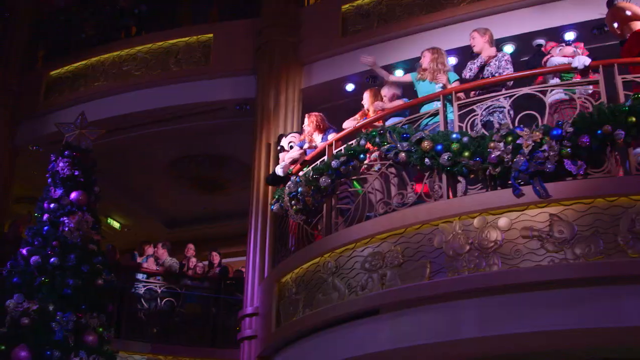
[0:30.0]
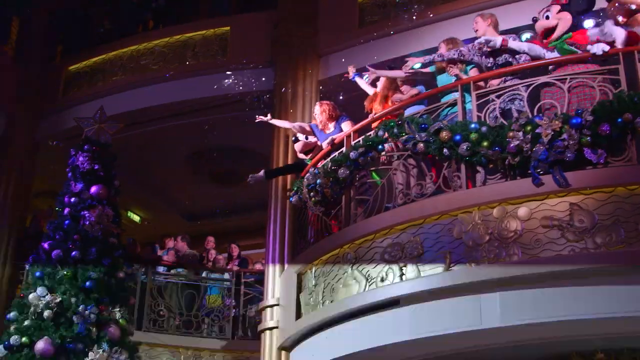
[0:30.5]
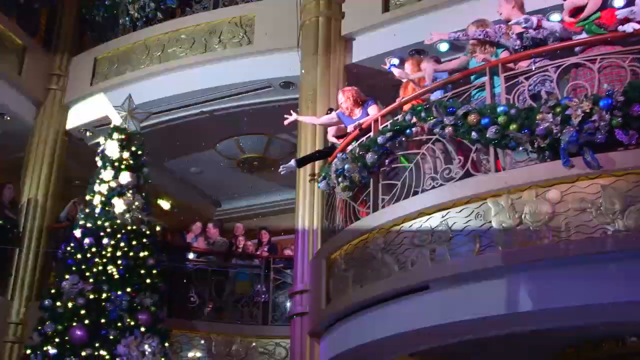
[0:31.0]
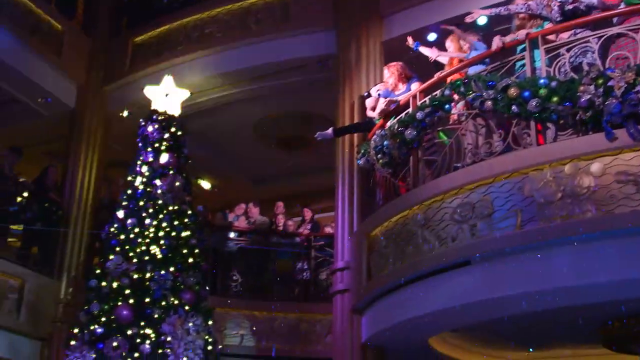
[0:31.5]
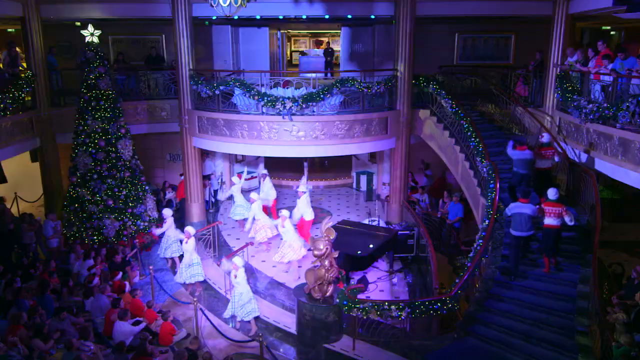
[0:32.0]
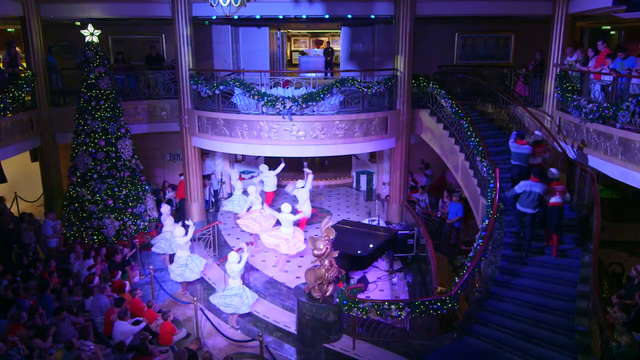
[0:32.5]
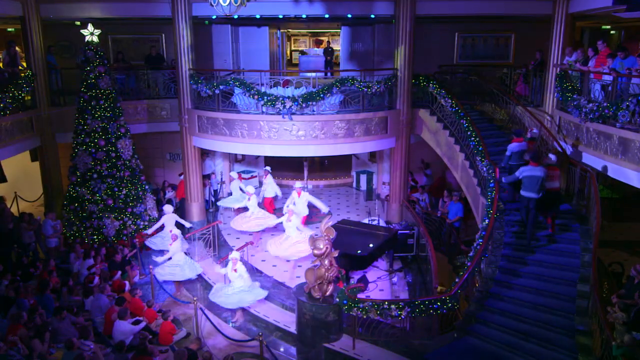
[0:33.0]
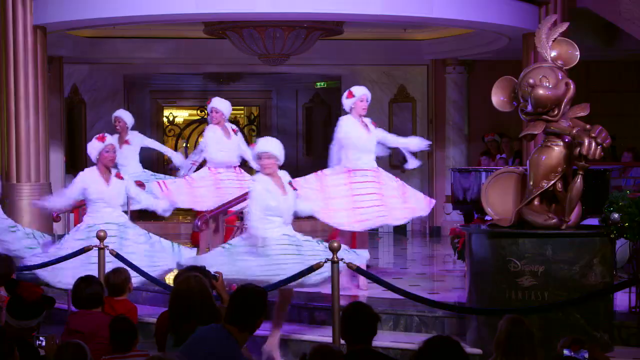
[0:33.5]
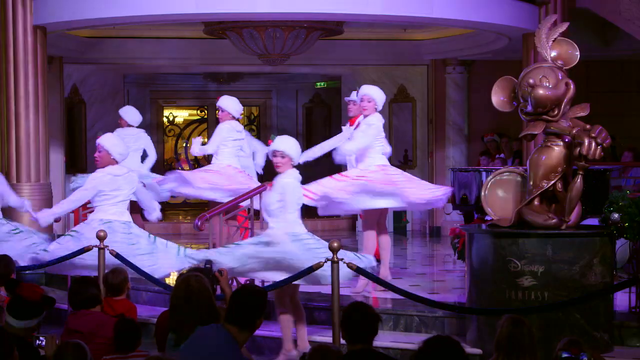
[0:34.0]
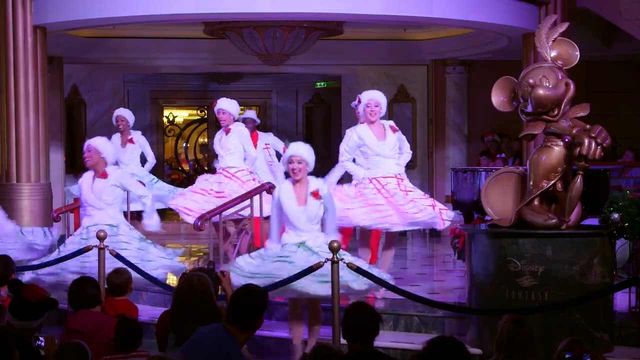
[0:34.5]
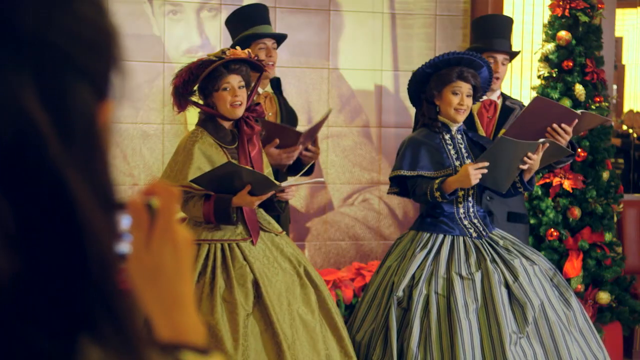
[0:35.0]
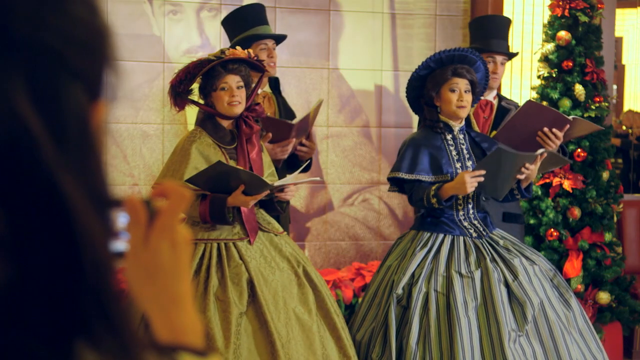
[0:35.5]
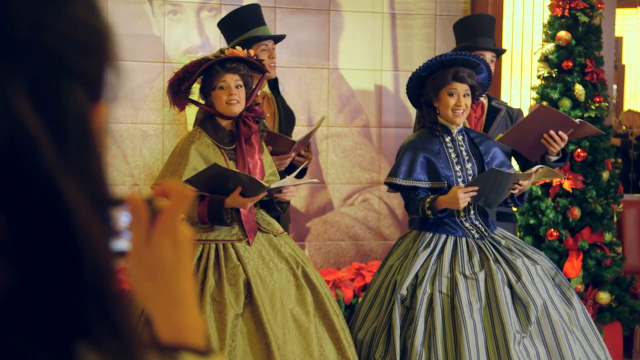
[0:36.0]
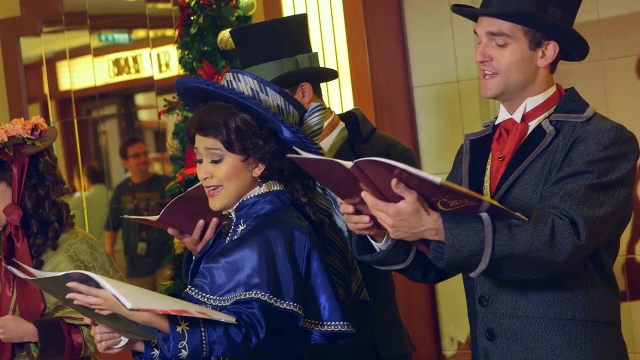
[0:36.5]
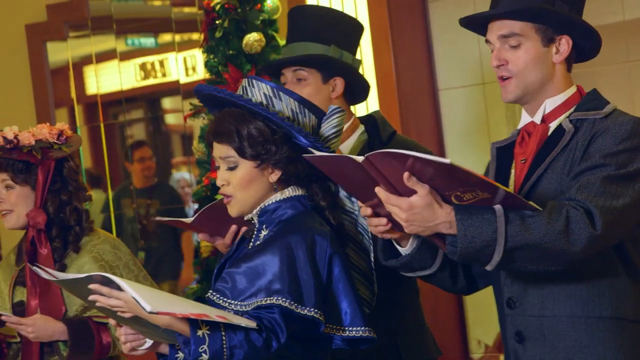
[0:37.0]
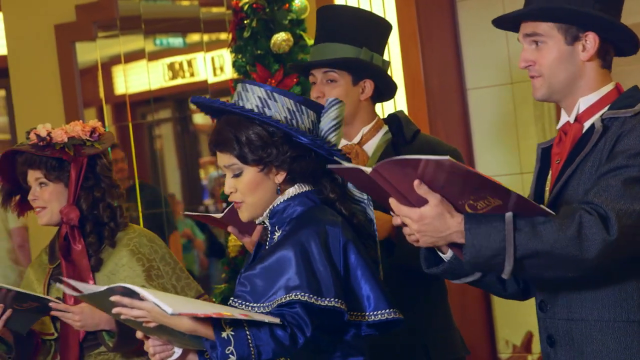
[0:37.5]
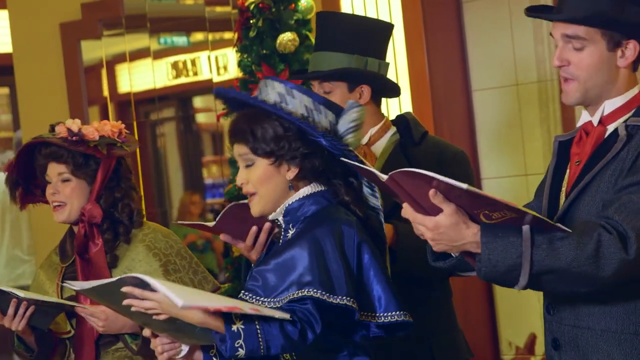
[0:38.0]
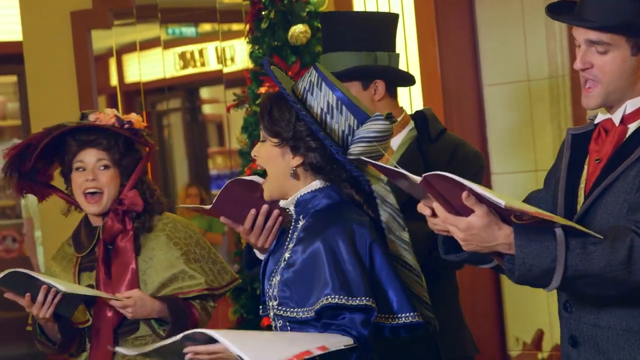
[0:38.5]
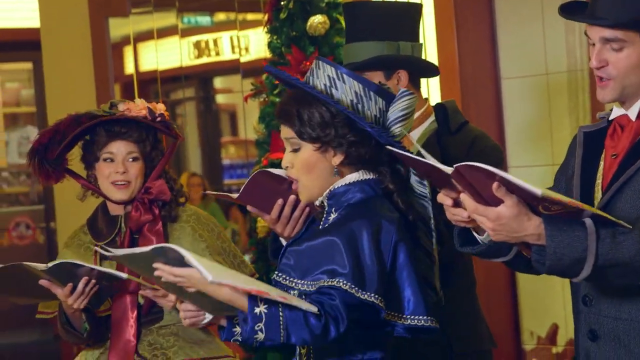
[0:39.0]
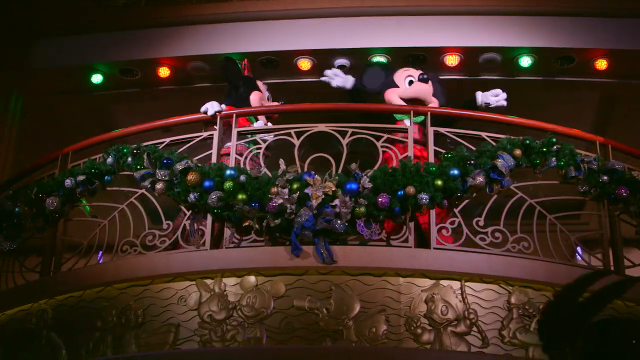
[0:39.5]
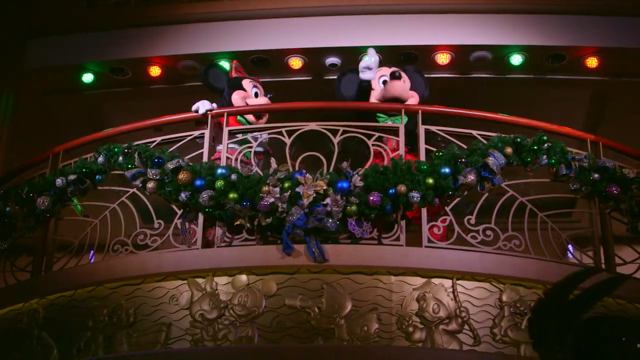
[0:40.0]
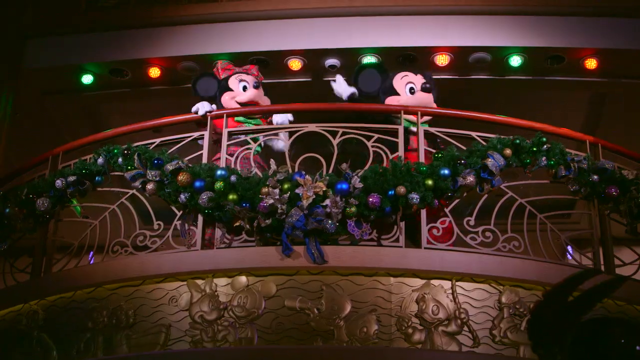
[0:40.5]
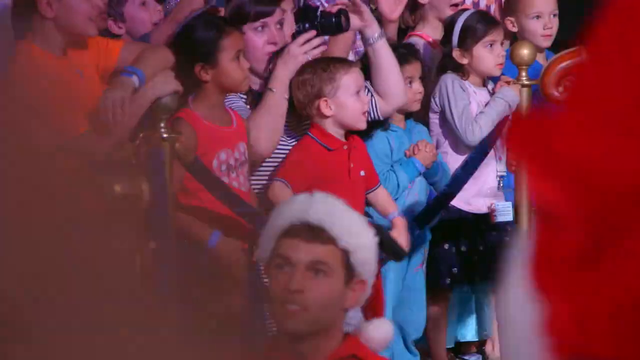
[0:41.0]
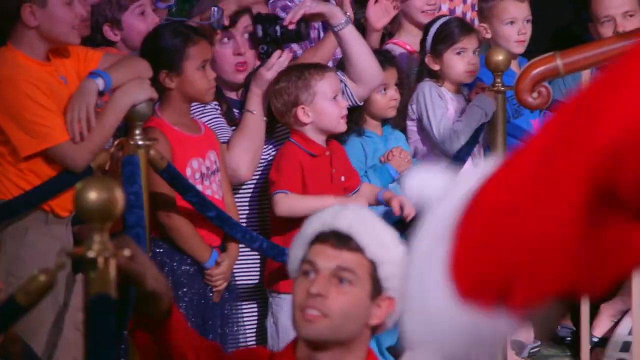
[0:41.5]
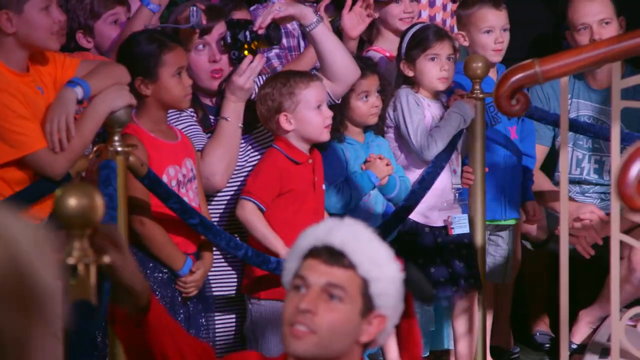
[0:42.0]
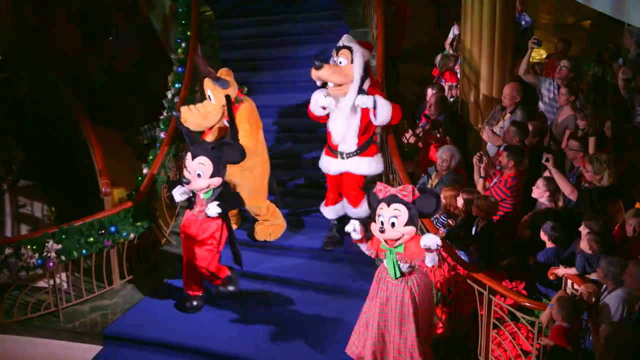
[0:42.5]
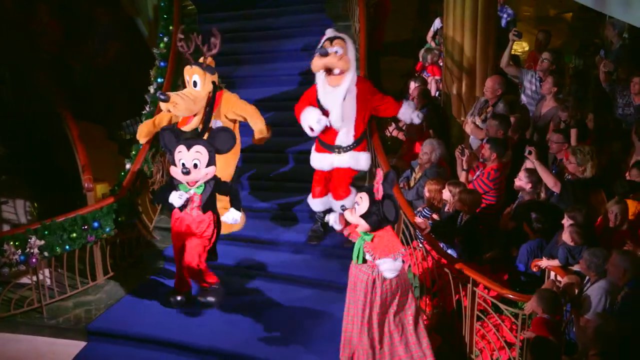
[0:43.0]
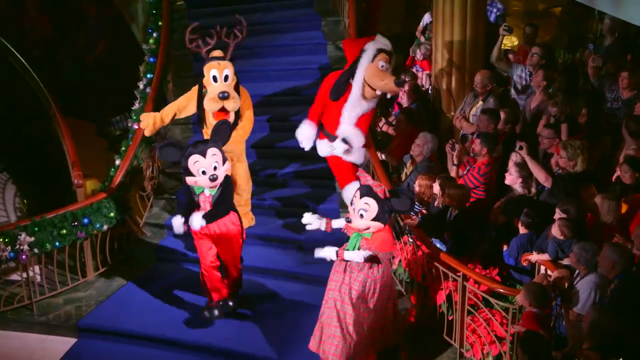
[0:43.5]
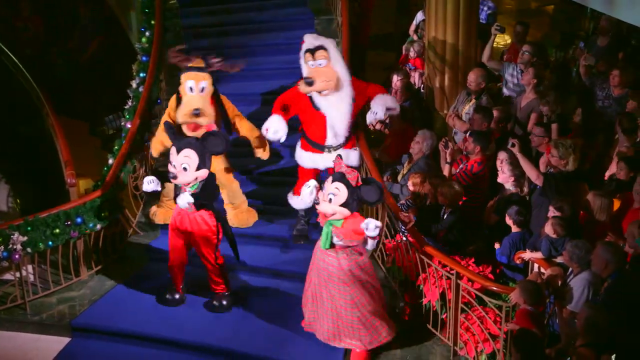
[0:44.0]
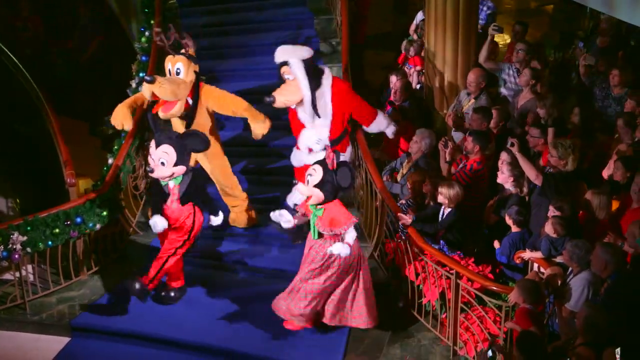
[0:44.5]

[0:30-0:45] People stand on the second-floor mezzanine overlooking the Christmas tree and the level below, apparently holding handfuls of glitter or something similar. They release it off the mezzanine balcony and it sprinkles down. On the ground floor there appears to be a show: women in white hats and white dresses twirl so their dresses extend outward, and men in white hats, white suit jackets and red pants dance and interact with them. In the next shot the dancers twirl behind a bronze statue of Mickey in the foreground. Ladies and men in old-time dress, with top hats, feather hats and big hoop dresses, hold a carol book and sing, appearing to sing Christmas carols; they are shown in a far shot and in a close-up. On the mezzanine balcony, Mickey and Minnie Mouse appear in their Christmas attire, and children look up at them in awe.